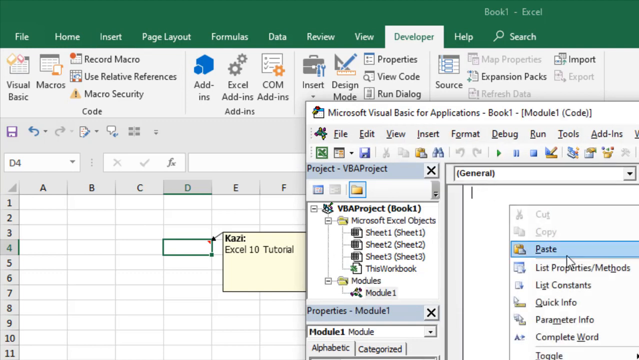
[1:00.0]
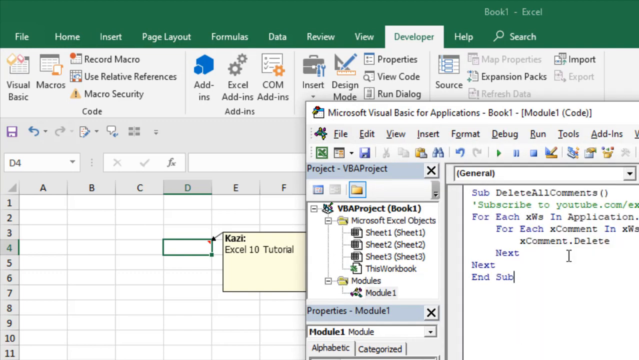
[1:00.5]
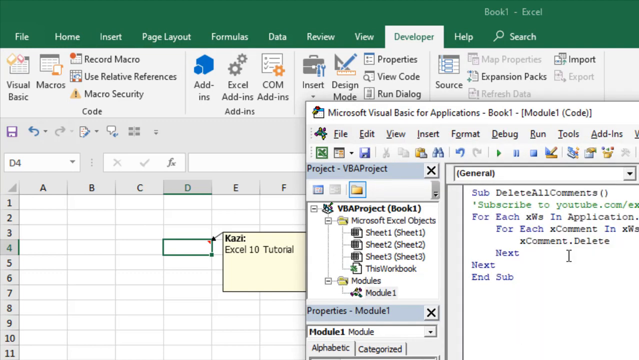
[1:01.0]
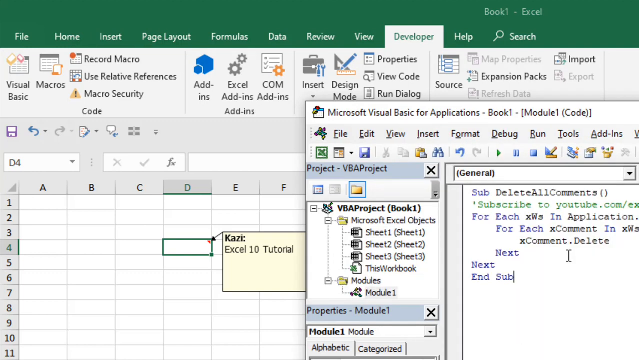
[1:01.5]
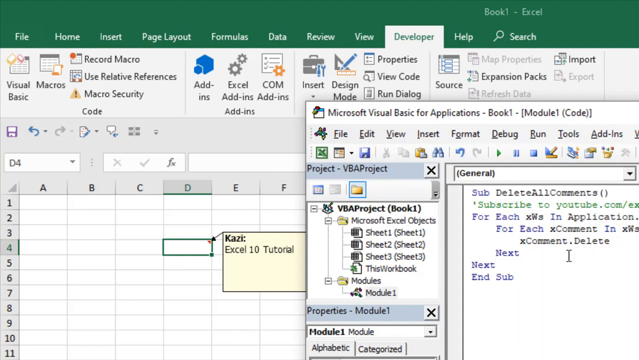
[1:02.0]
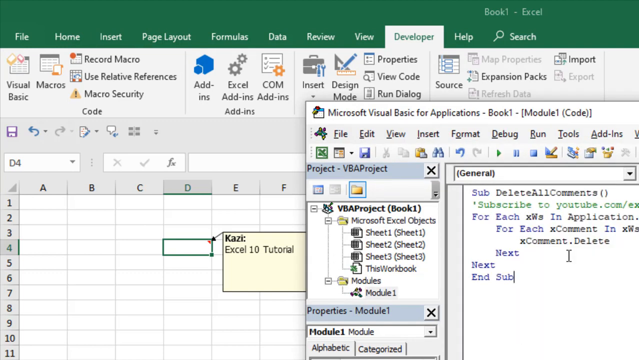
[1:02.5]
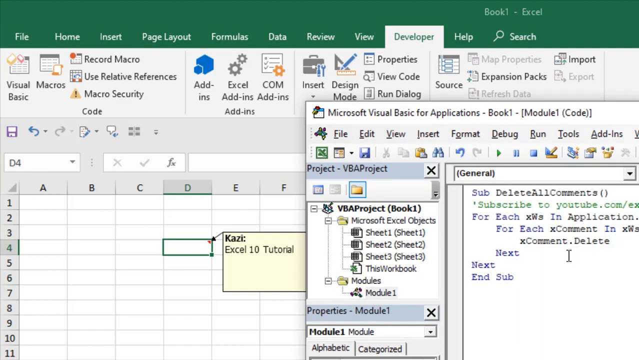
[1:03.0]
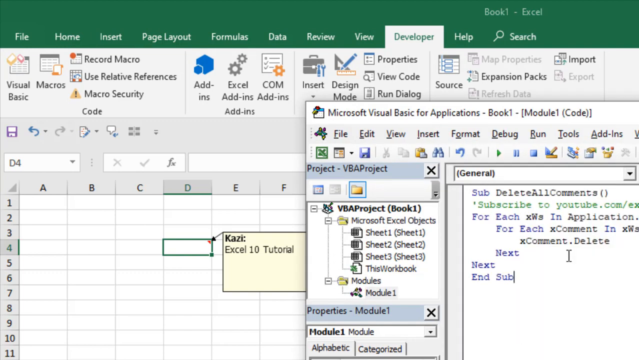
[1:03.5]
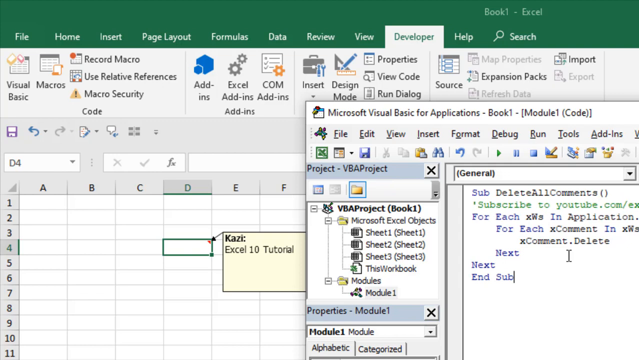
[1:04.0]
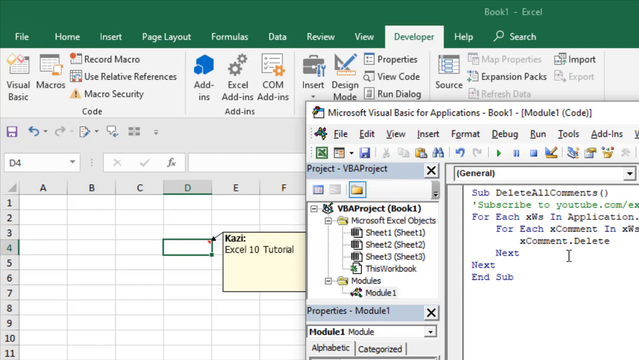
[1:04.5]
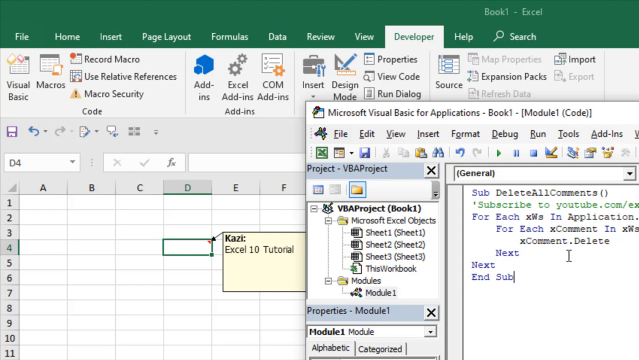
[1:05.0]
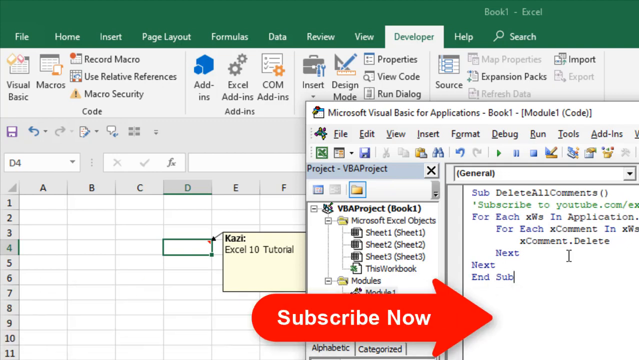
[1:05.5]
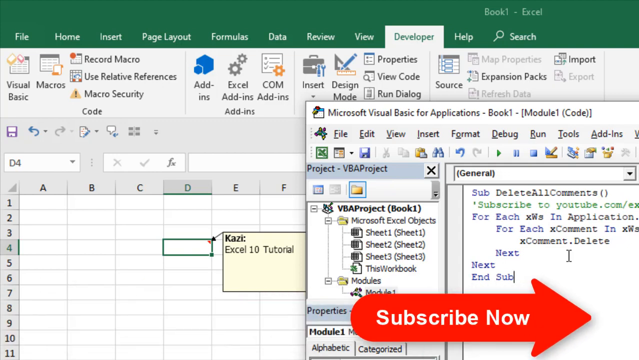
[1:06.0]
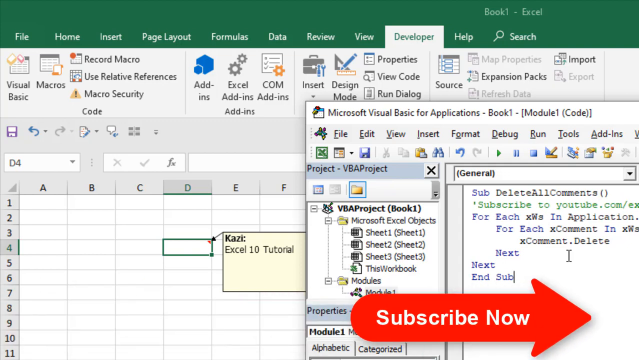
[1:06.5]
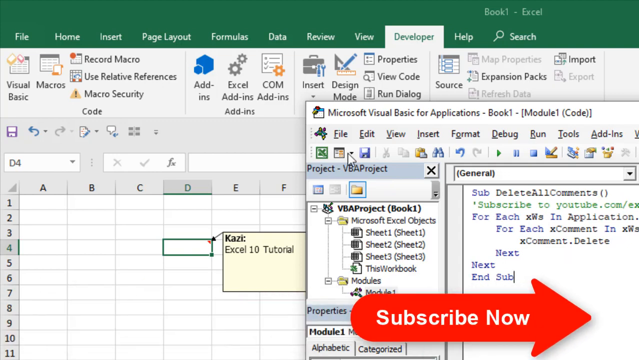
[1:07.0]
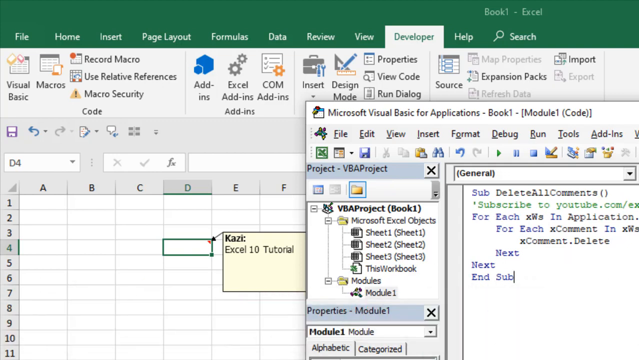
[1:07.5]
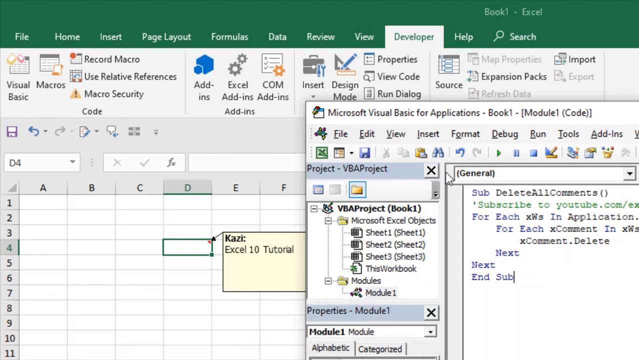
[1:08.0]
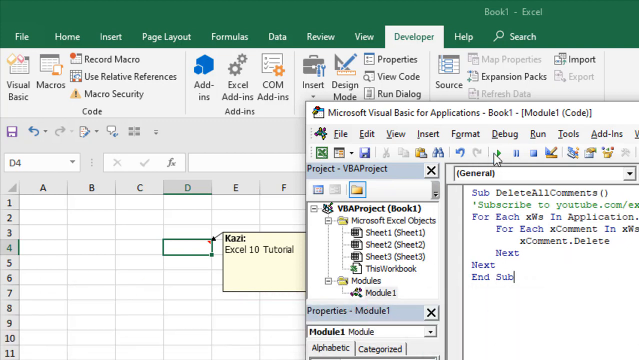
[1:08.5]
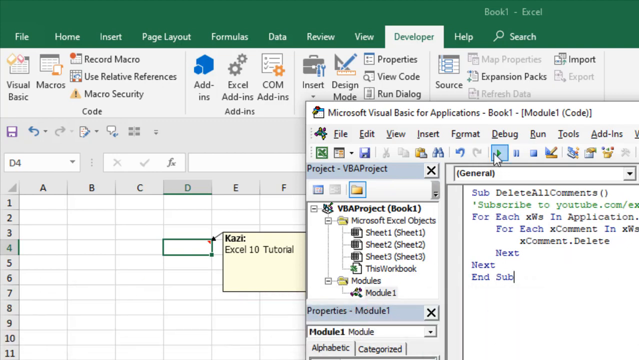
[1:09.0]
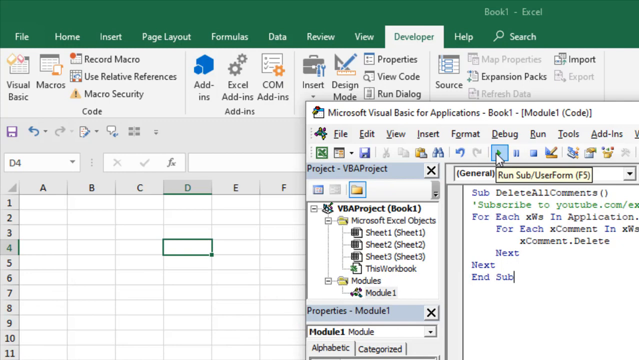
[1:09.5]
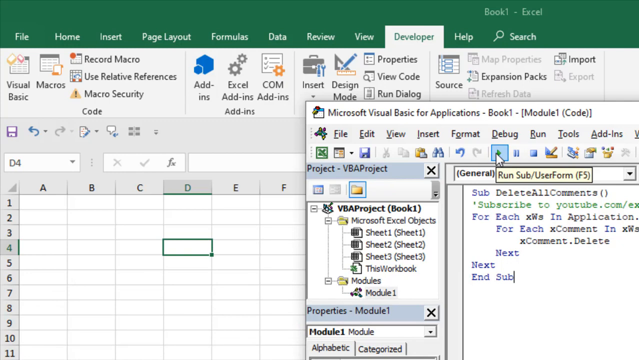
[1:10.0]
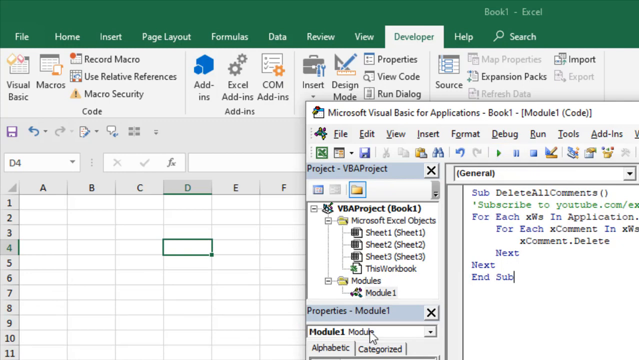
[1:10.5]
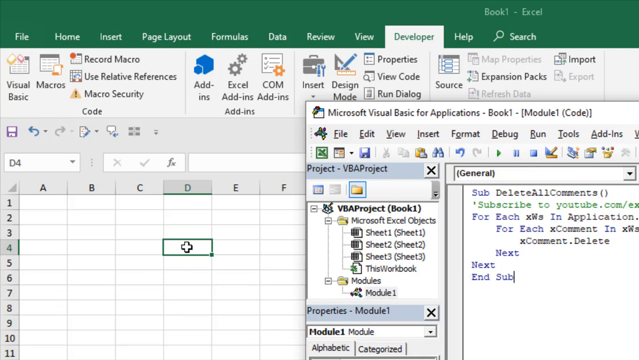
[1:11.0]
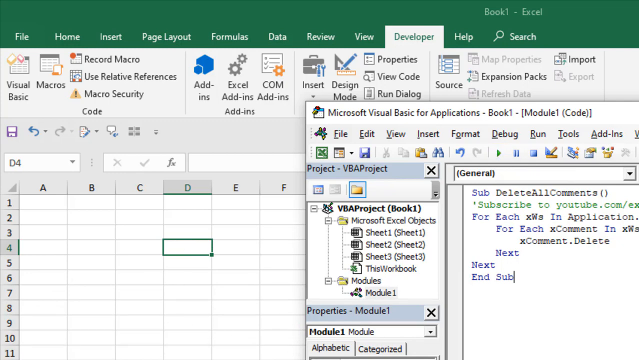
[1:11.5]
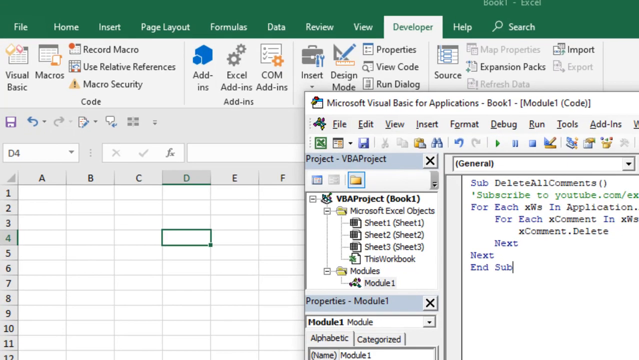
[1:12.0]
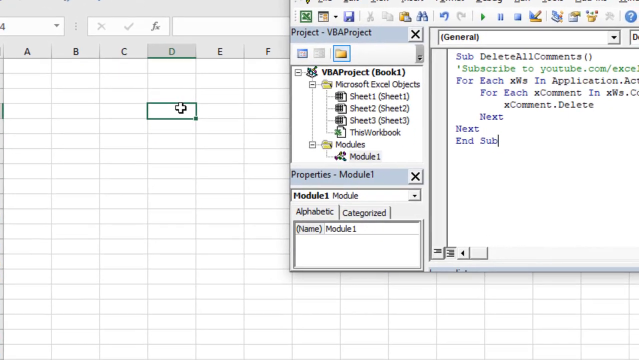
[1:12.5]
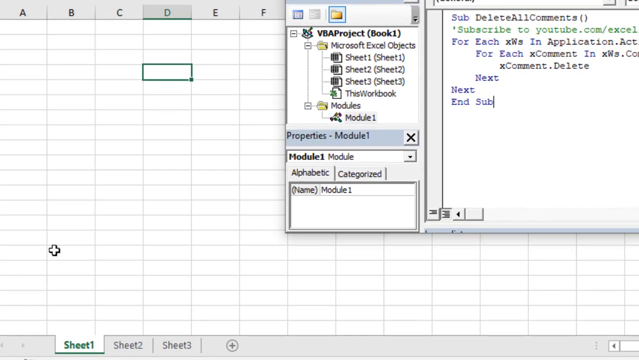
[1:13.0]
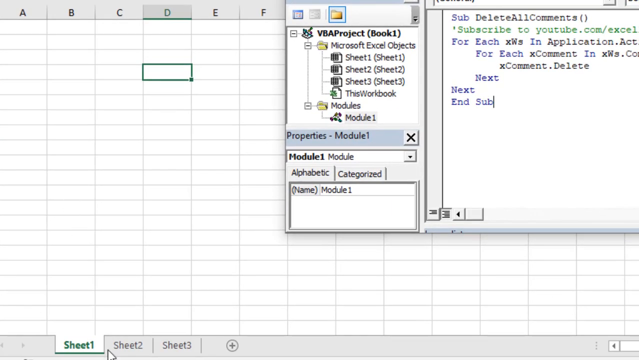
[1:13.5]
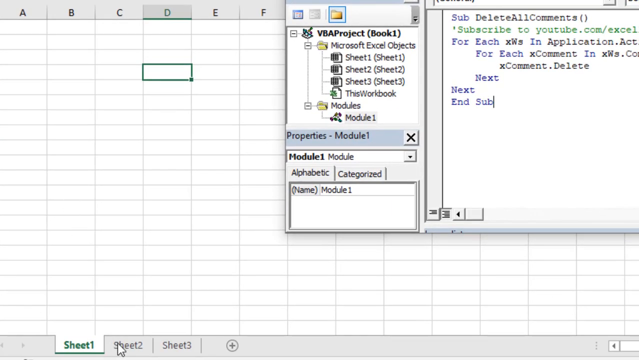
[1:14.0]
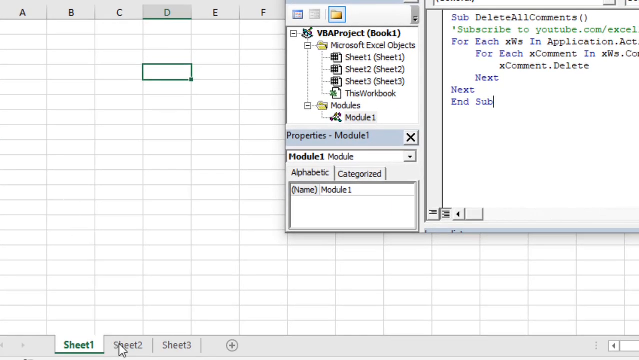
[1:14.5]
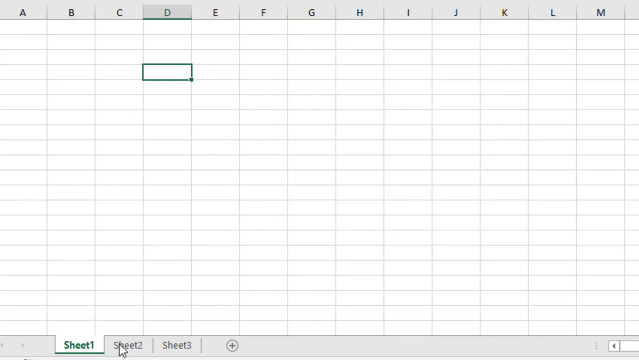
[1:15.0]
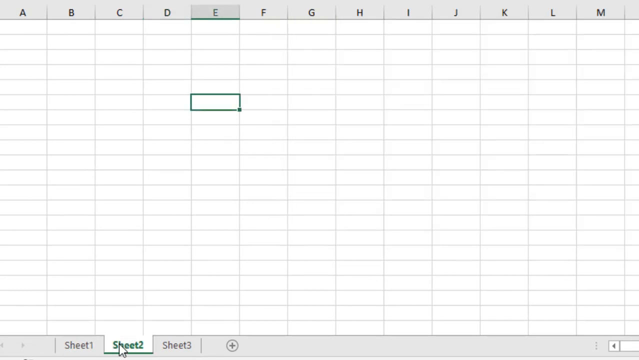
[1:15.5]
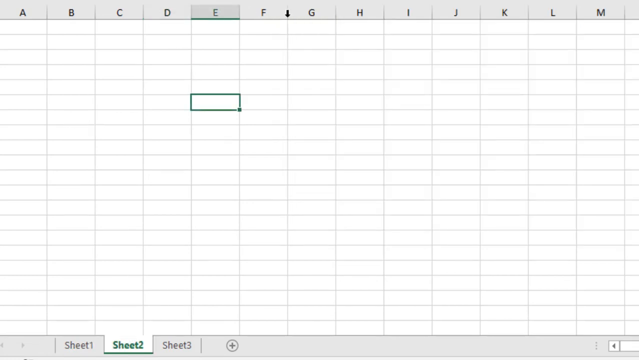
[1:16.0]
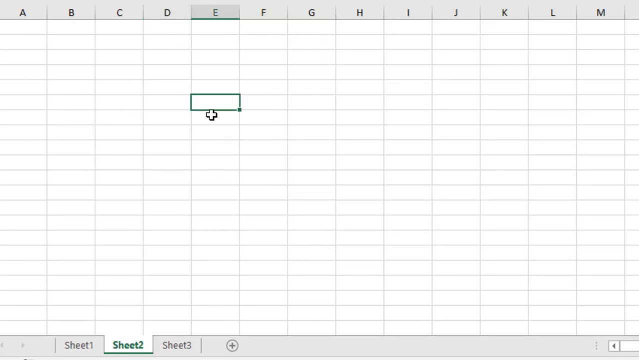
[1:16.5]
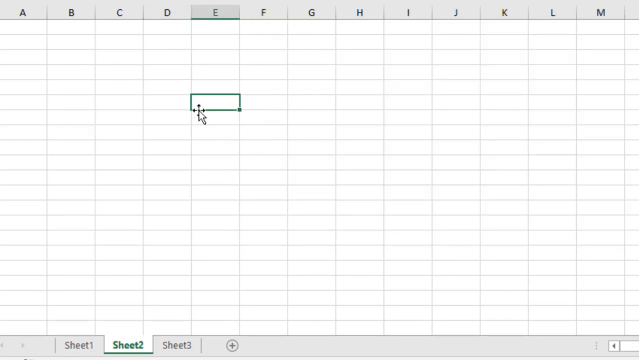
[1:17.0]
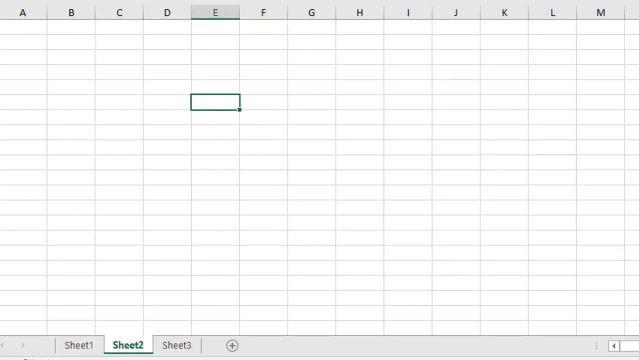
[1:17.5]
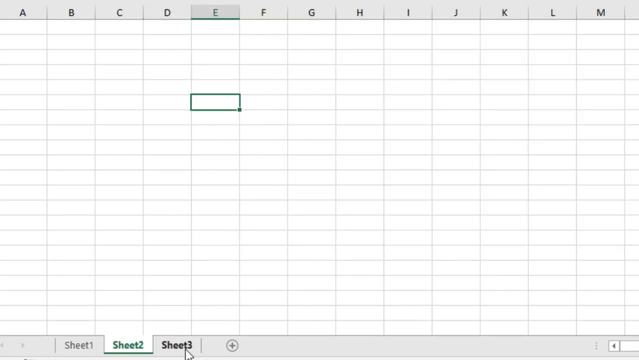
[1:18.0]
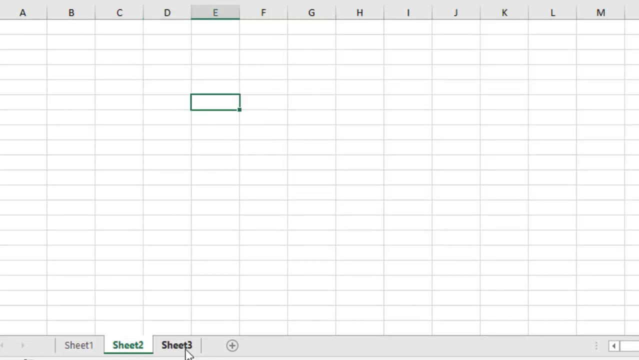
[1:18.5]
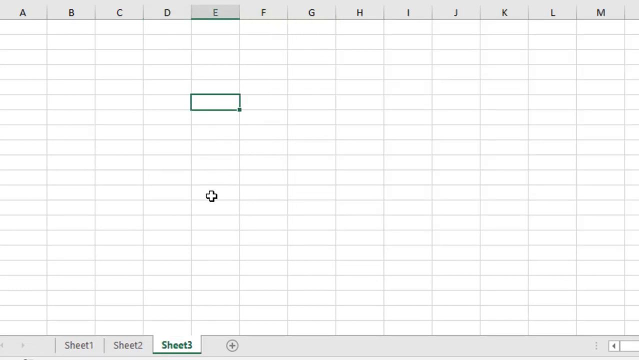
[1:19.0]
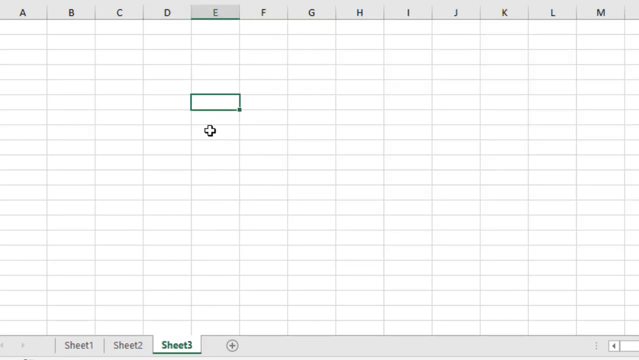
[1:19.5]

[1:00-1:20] What looks like computer code pops up just to the right of the list of sheets, and the "subscribe now" arrow appears again. The sheet tabs for sheet two and sheet three are clicked, and the highlighted cell stays in place. The Visual Basic for Applications window goes away when the other sheets are clicked, and the yellow text box had gone away while the Visual Basic for Applications window was in use. An empty grid remains on a white background, with only the cell under the cursor highlighted. The cursor moves around, alternating between an arrow and a white plus sign on the grid.